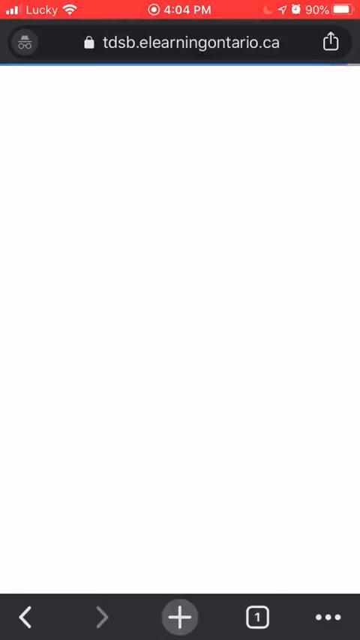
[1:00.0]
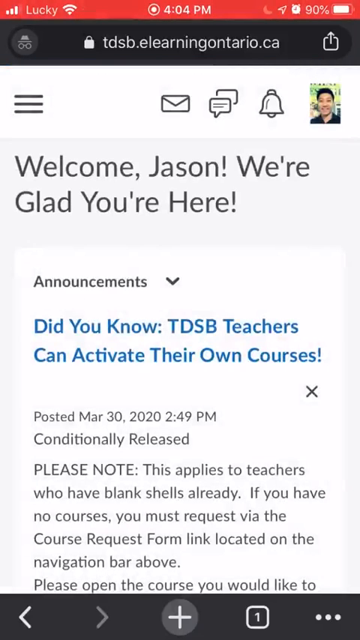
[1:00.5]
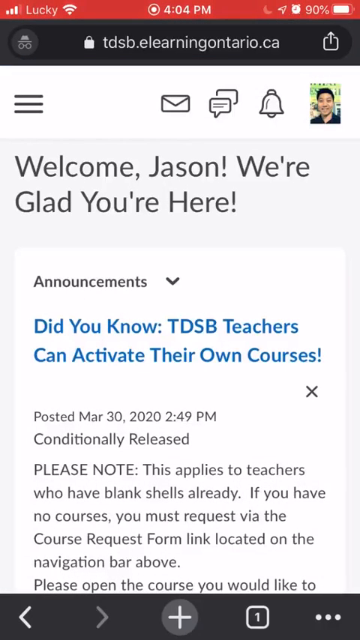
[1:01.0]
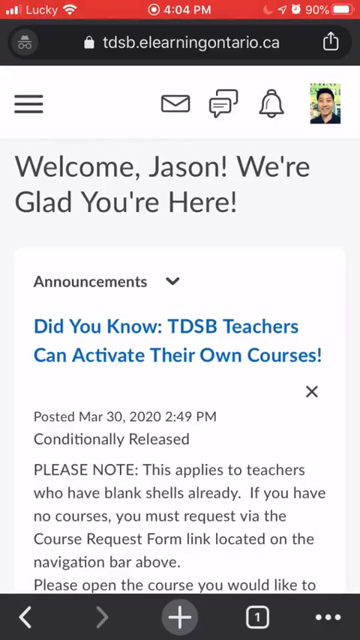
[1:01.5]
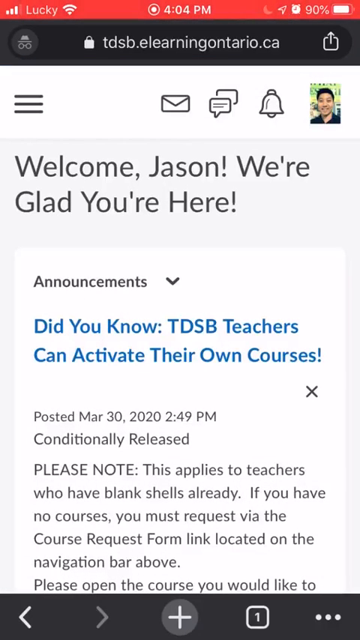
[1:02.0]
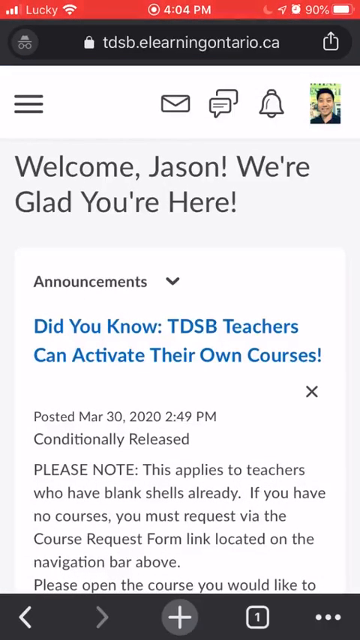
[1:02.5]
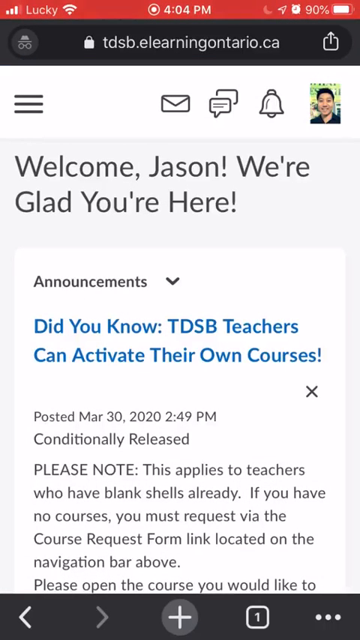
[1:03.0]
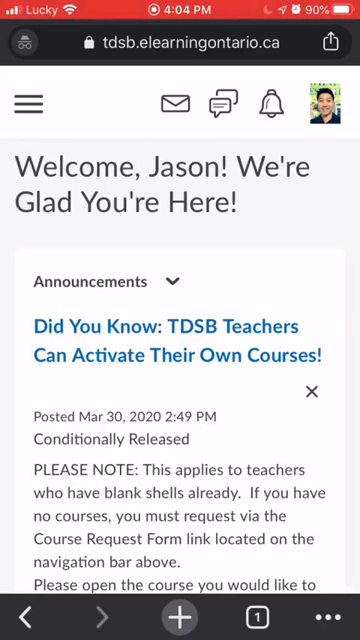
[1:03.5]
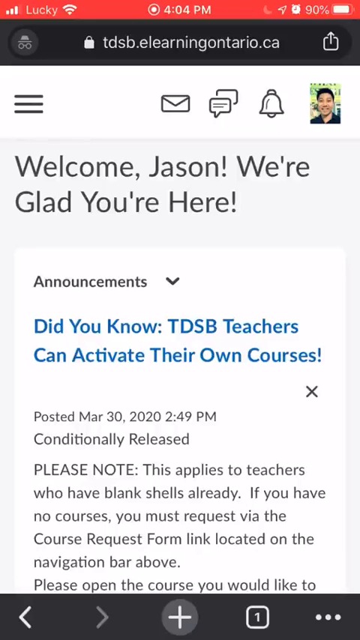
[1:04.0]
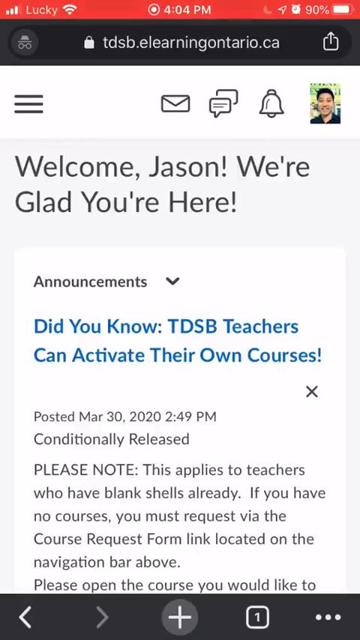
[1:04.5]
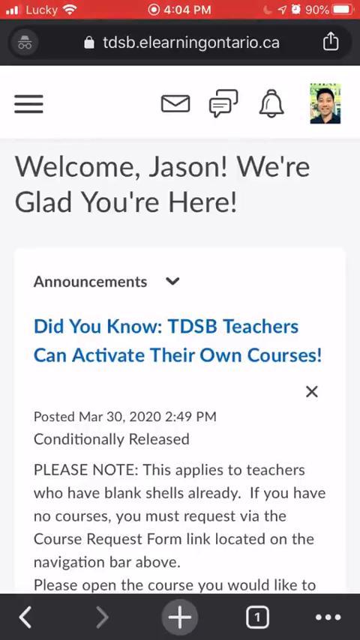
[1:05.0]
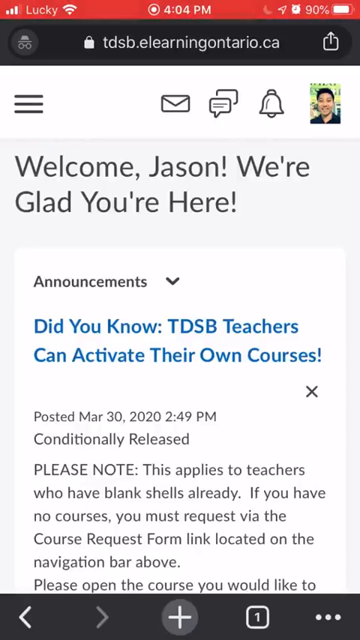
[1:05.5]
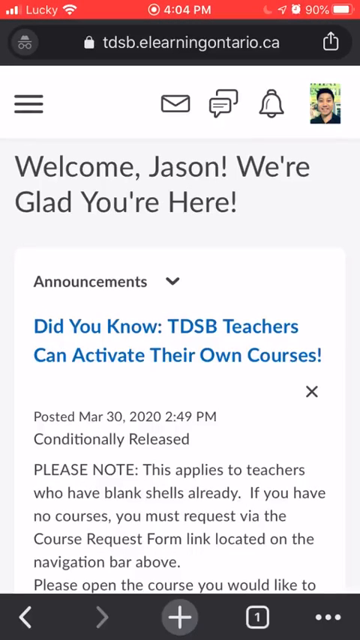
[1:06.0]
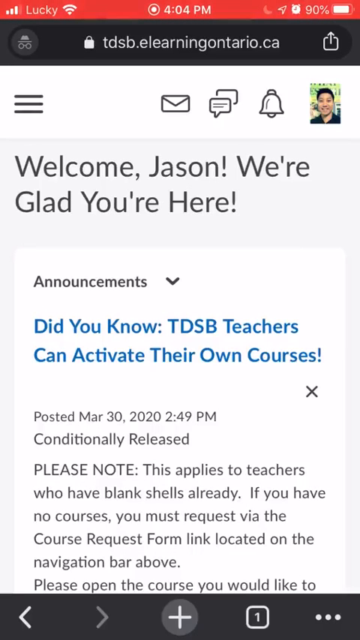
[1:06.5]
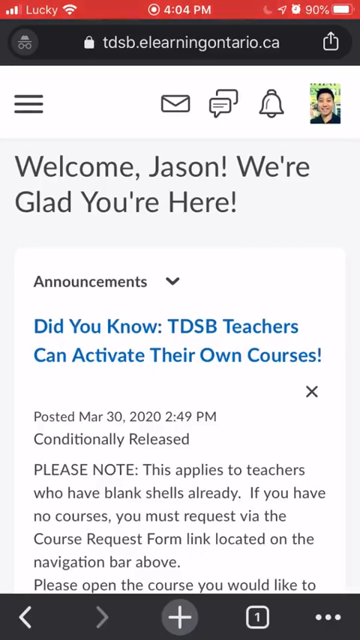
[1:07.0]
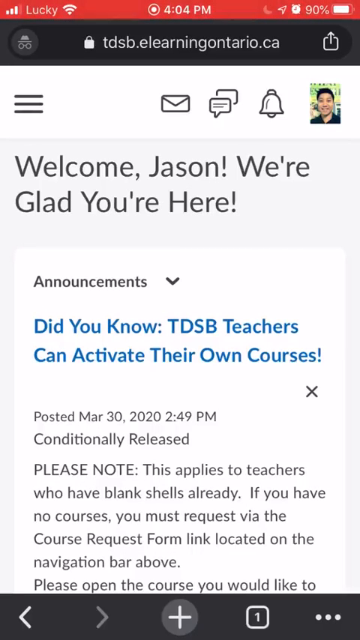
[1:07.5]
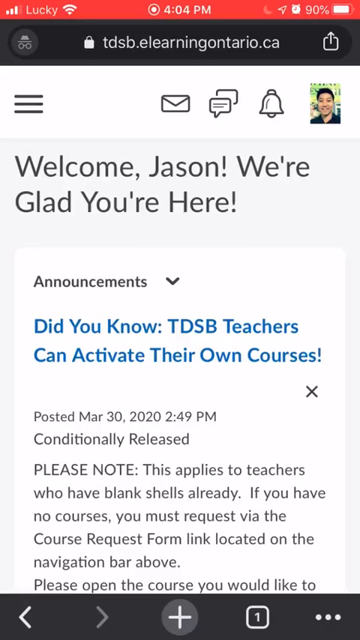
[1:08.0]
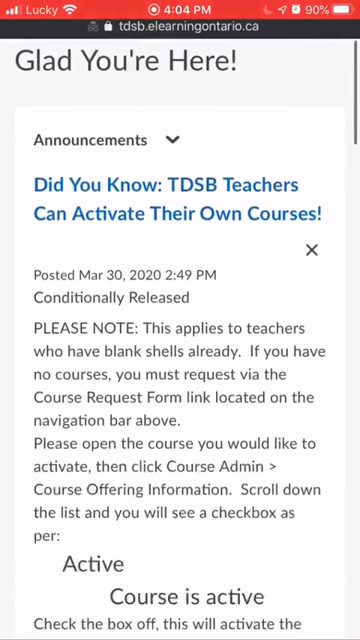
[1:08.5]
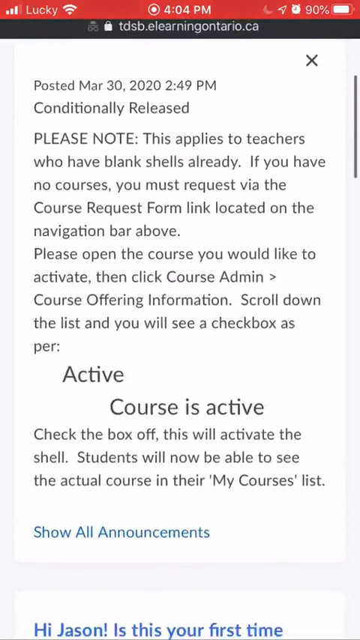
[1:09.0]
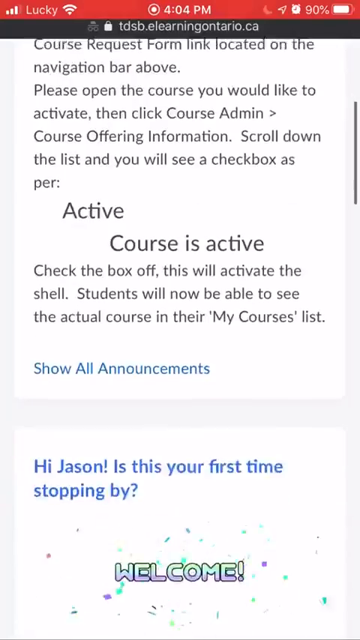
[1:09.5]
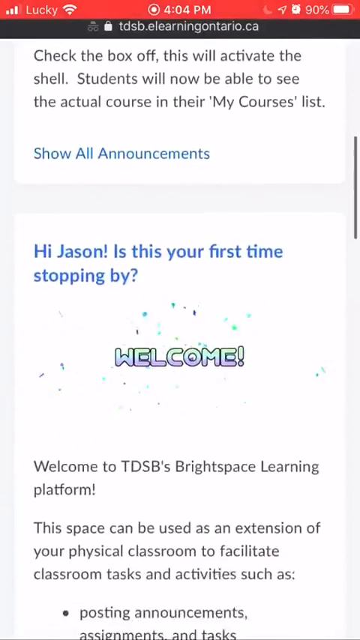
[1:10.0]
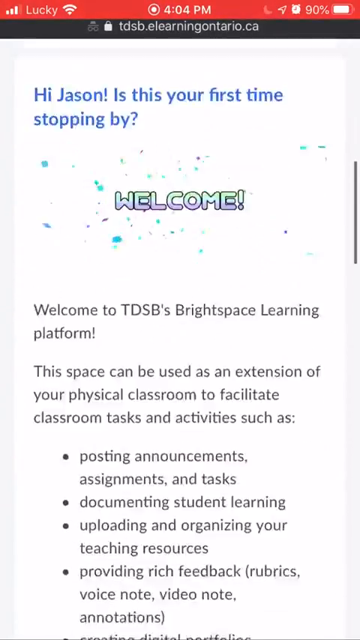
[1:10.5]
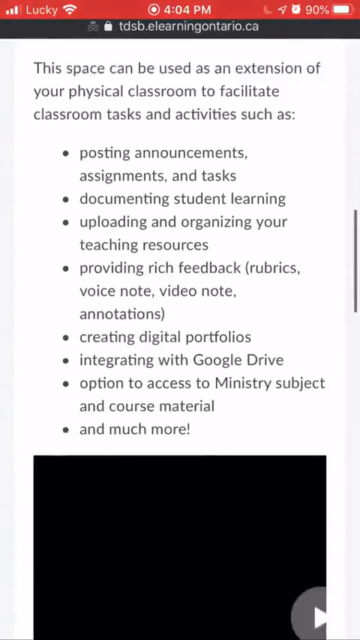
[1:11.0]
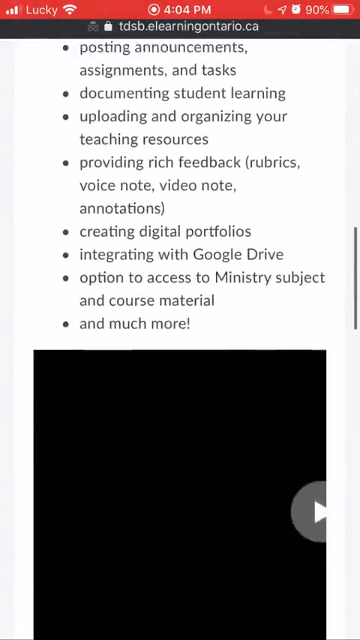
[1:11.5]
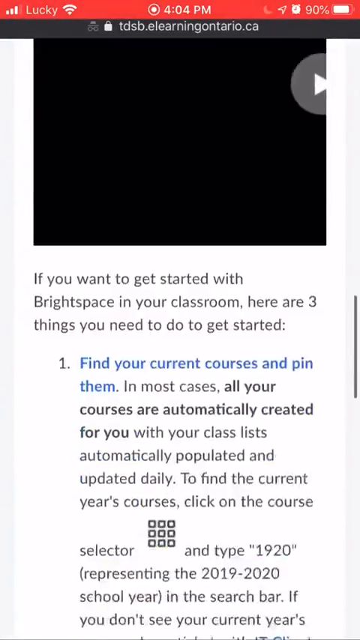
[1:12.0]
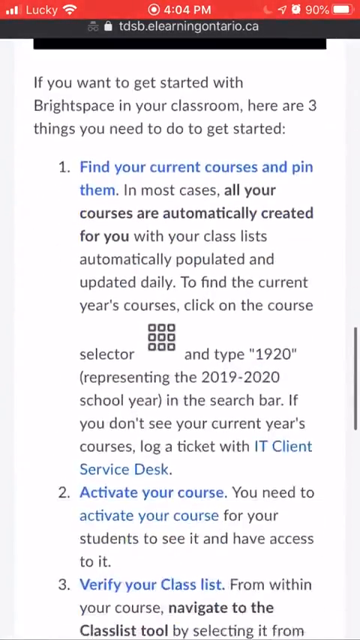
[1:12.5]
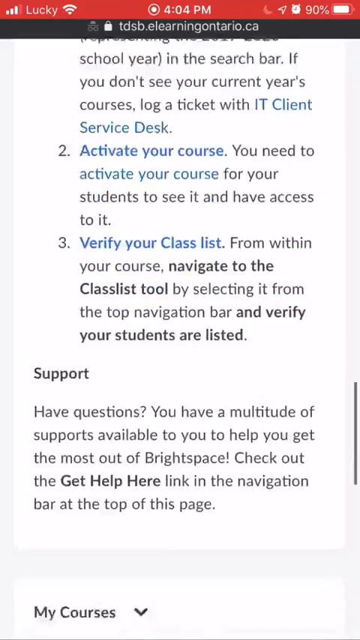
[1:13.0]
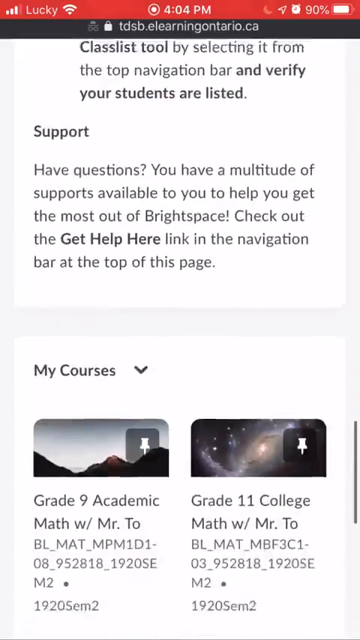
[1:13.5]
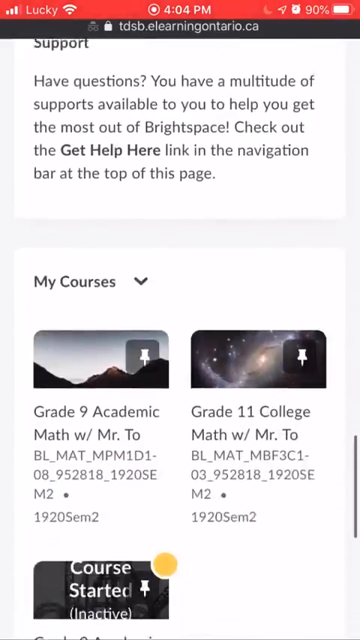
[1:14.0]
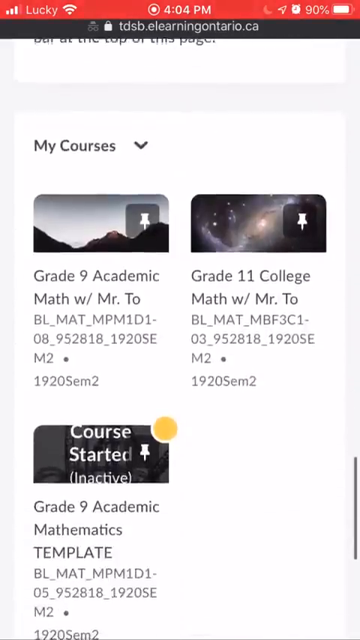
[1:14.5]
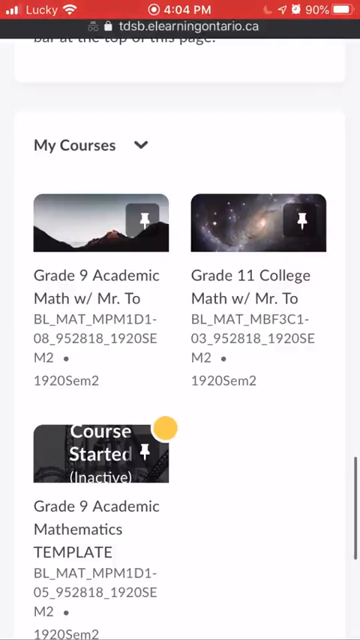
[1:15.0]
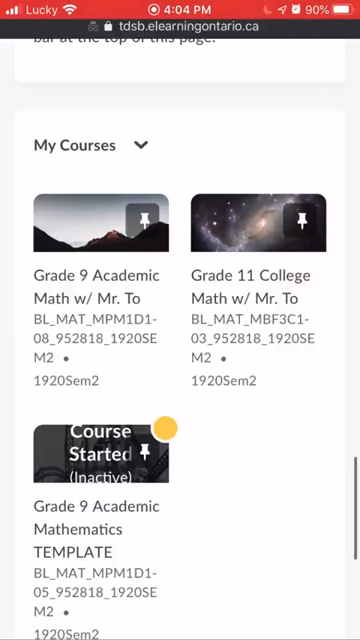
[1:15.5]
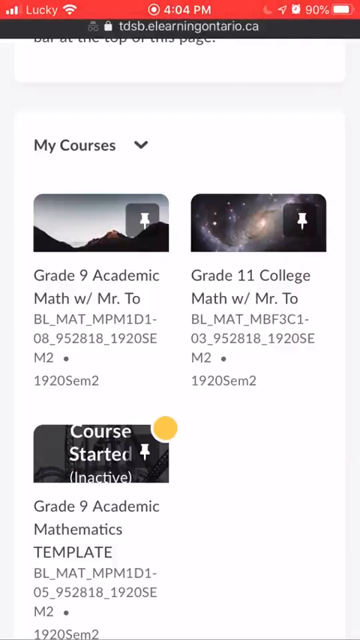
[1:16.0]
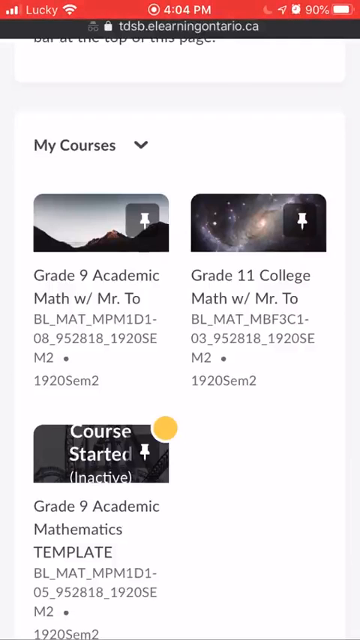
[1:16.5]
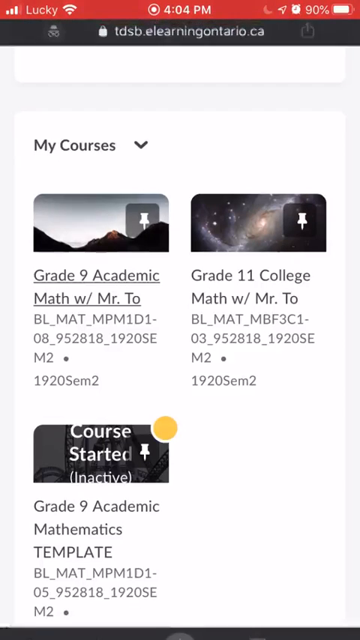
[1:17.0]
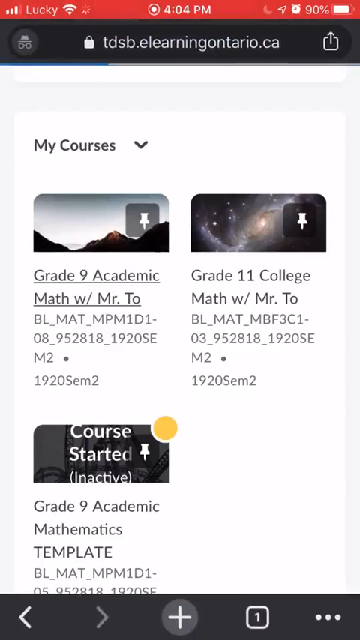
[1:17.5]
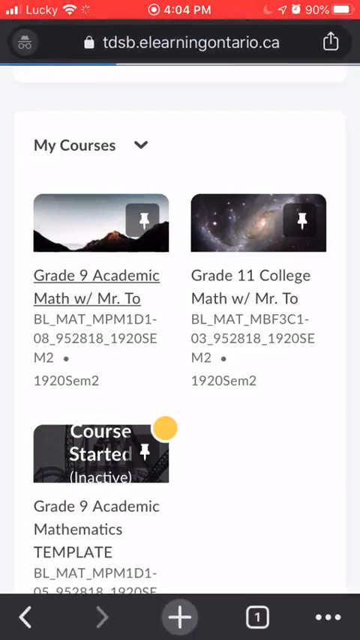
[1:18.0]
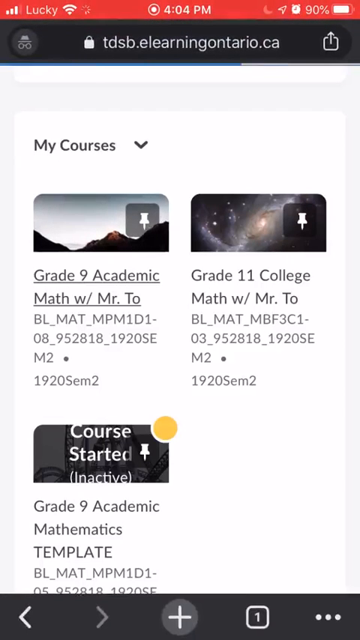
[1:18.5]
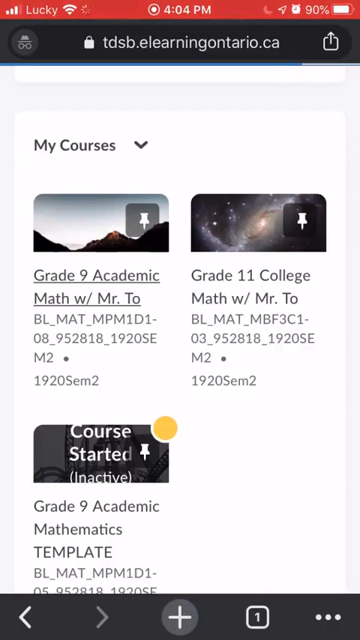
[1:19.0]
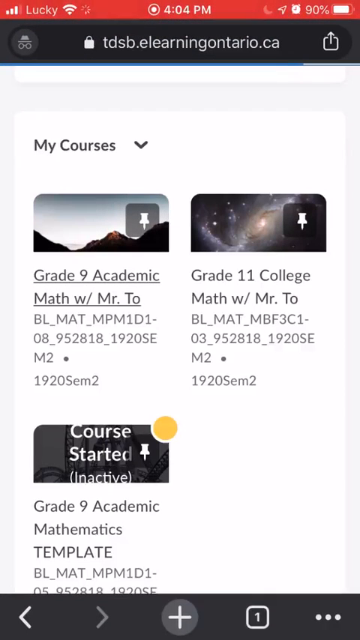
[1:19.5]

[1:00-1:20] What appears to be a portal greets the user with the message "welcome, Jason, we're glad you're here". An announcement reads "did you know TSB teachers can activate their own courses?", followed by an active notification of a course, a hello video link, and a lot of text. The user scrolls down through text intertwined with various embedded video links and reaches My Courses at the lower end of the screen, where three courses are featured: Grade 9 Academic Math with Mr. T.O., which has some sort of STEM-2-1920 tag; Grade 11 College Math with Mr. T.O.; and a Grade 9 Academic Mathematics template. All of them are apparently tagged.